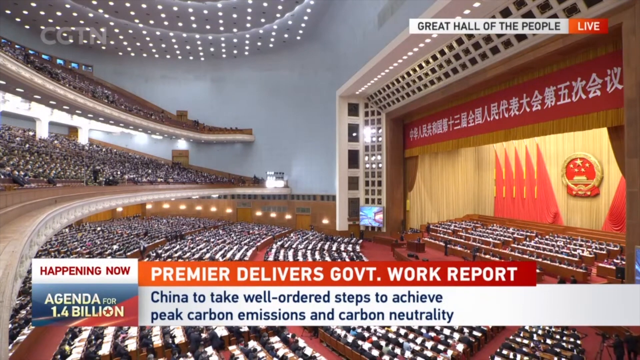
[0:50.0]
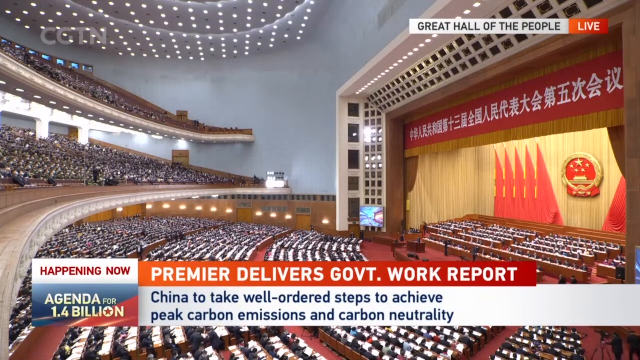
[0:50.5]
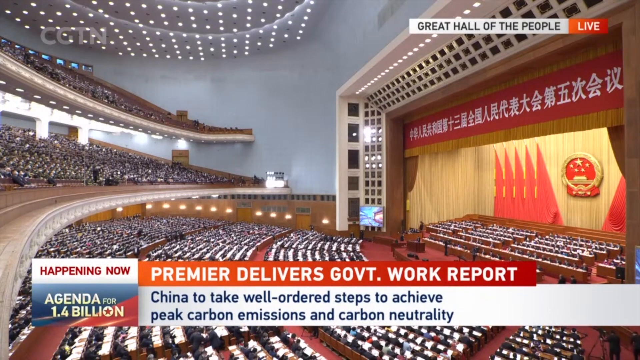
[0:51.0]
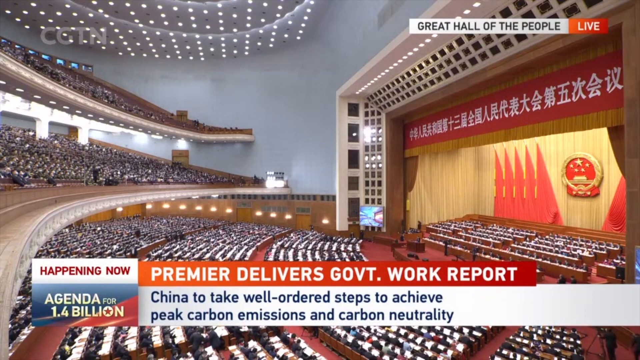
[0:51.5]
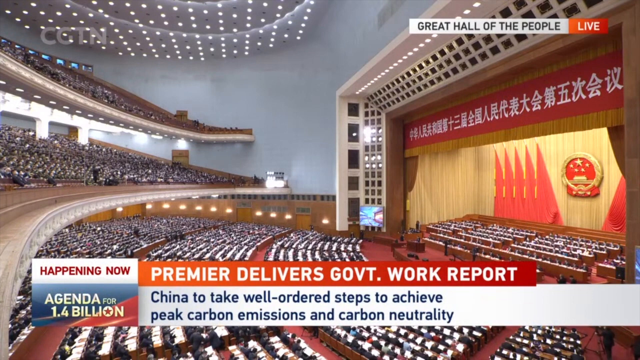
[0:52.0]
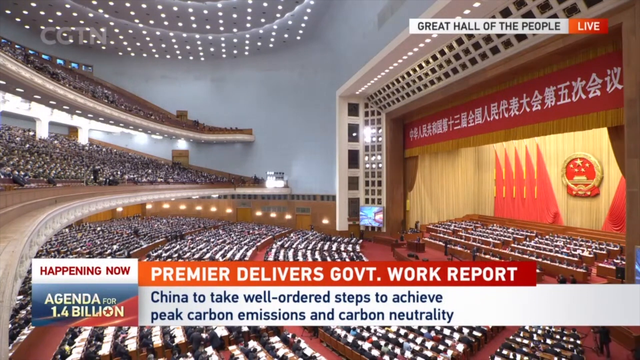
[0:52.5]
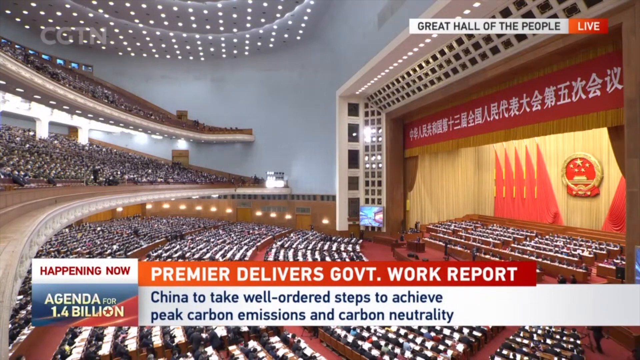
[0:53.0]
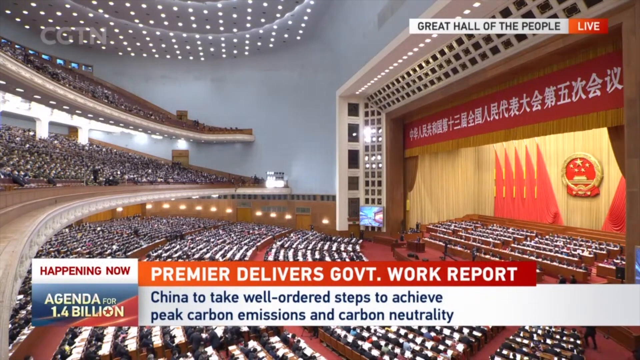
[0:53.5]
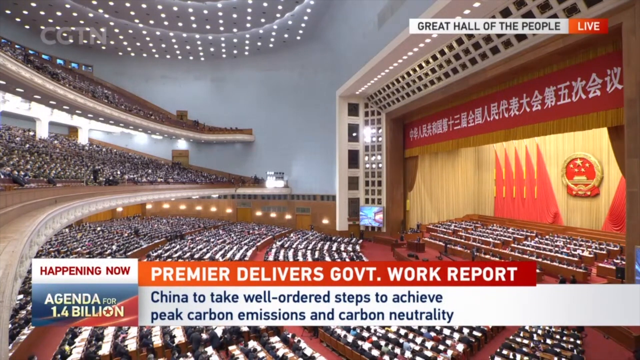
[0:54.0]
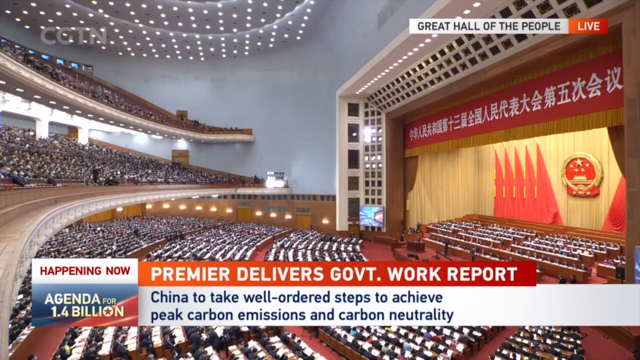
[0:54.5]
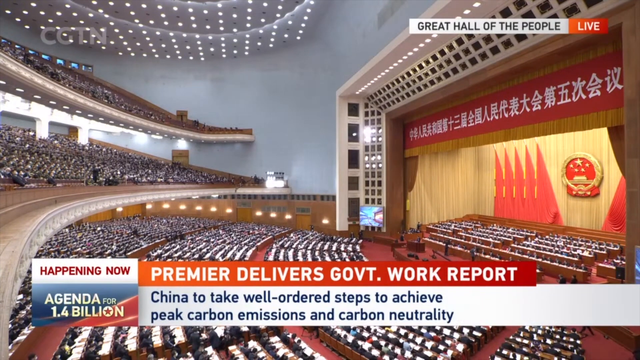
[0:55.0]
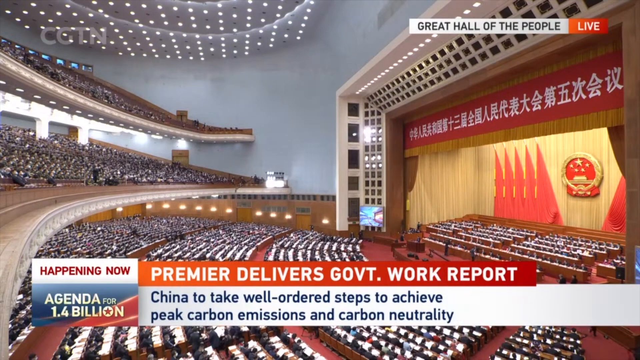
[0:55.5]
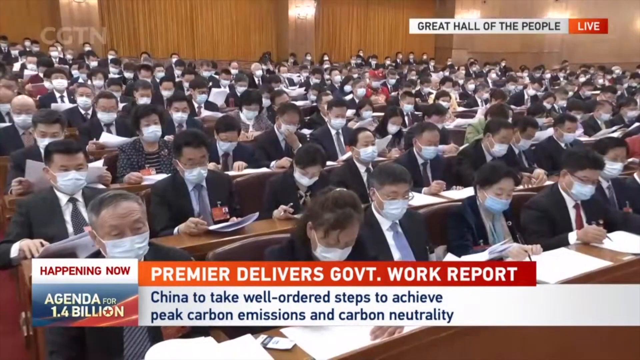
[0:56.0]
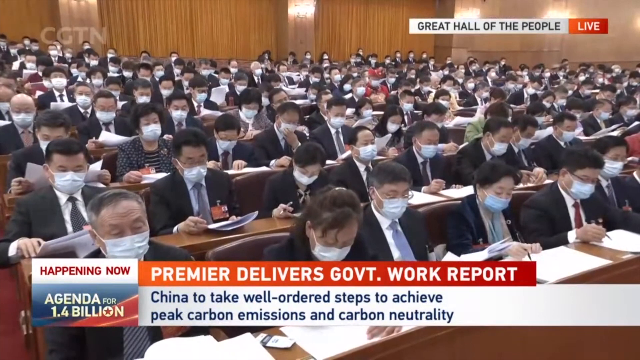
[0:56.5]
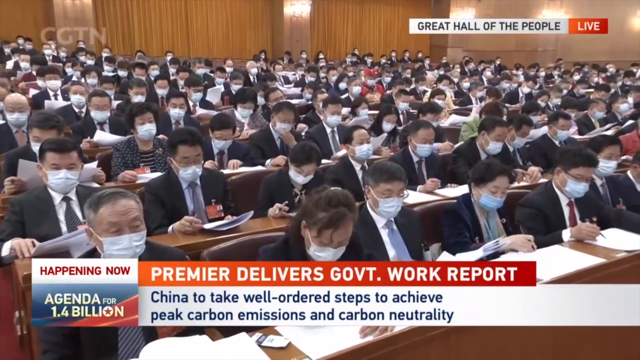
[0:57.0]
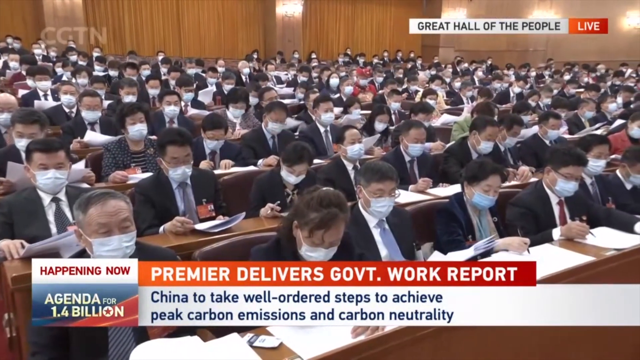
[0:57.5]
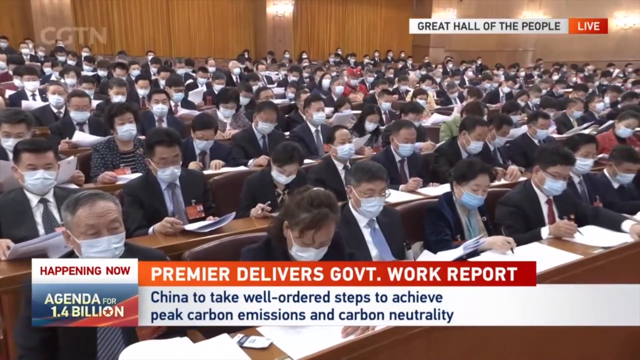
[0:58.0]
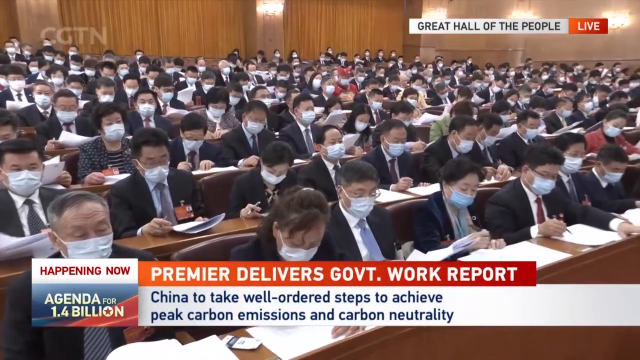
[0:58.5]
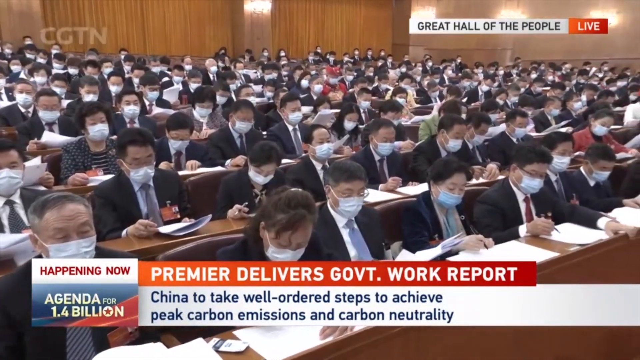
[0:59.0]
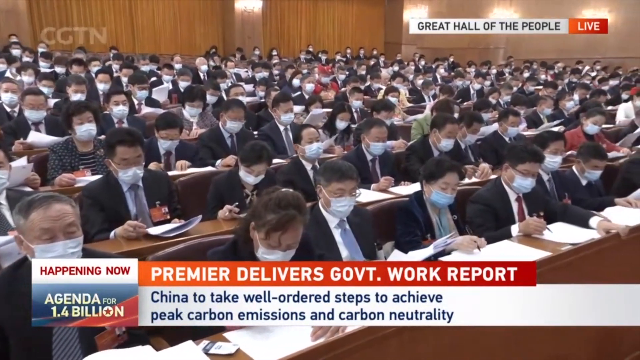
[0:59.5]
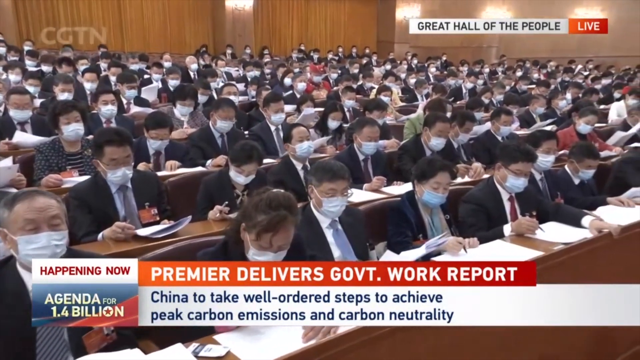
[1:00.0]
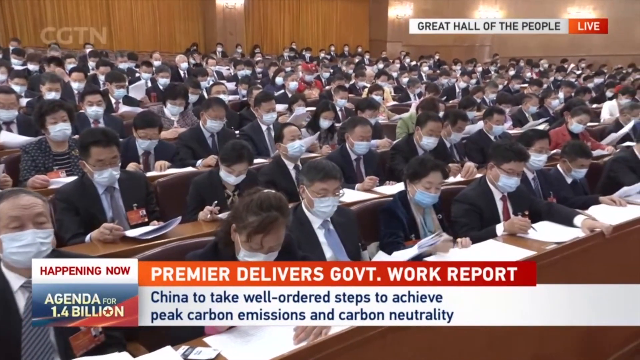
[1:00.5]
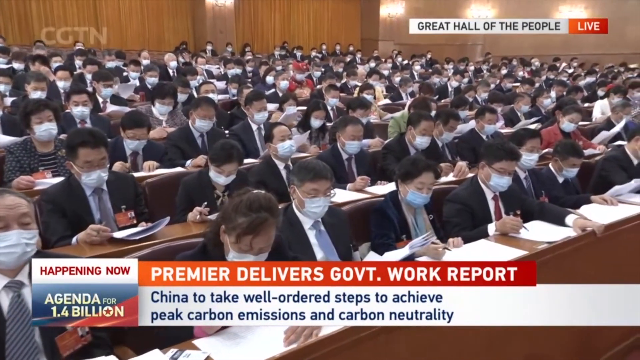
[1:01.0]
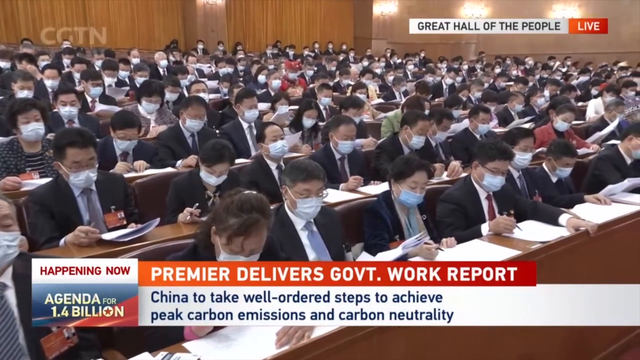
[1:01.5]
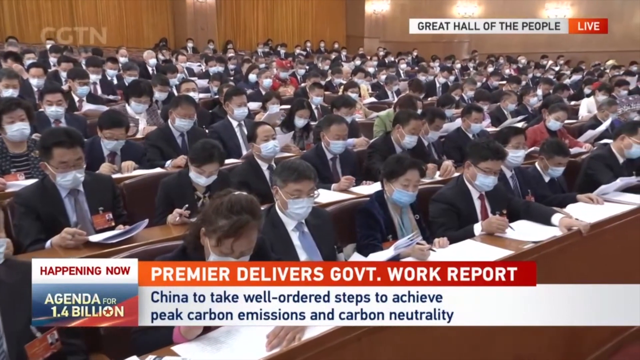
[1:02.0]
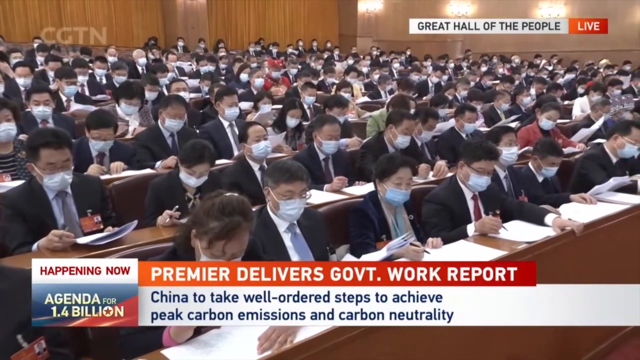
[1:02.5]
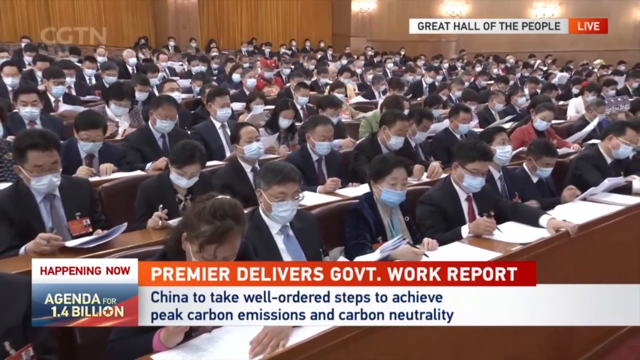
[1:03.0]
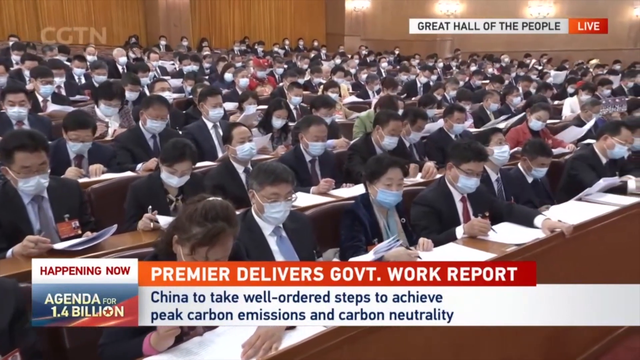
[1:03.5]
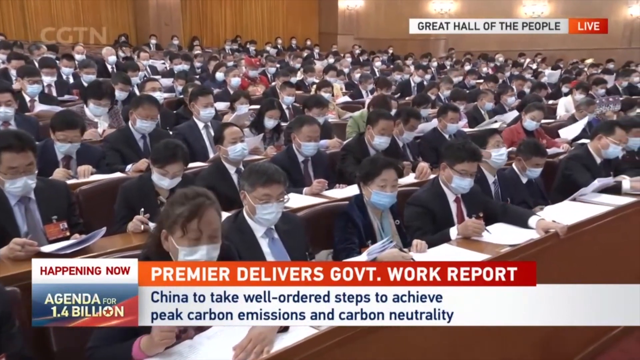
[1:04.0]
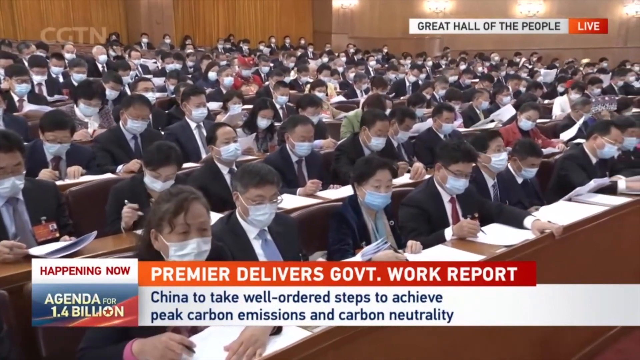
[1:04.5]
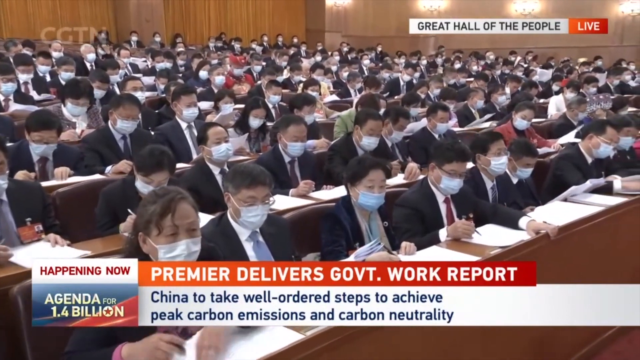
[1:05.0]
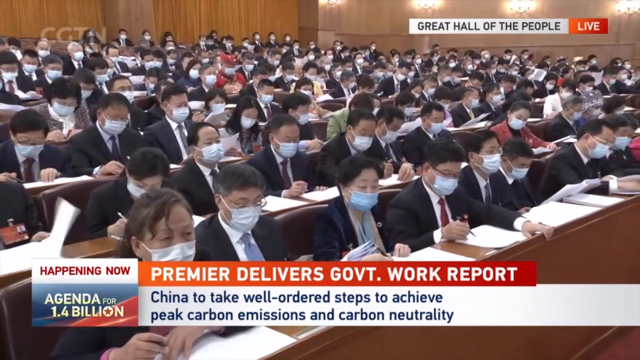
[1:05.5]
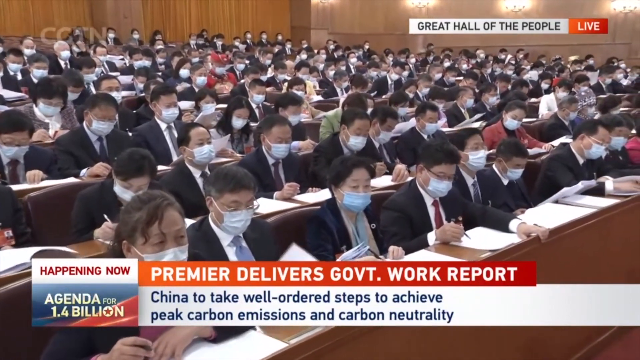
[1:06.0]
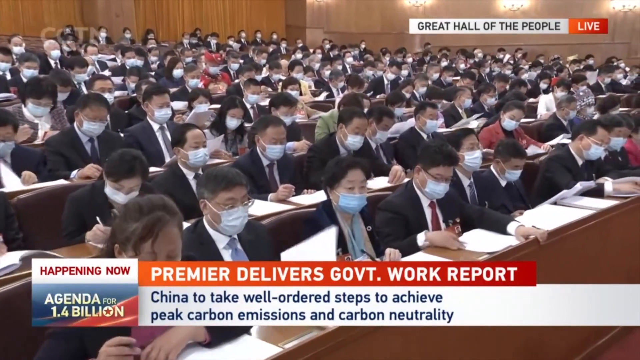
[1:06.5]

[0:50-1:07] After the side view comes another close-up of people at their desks. Everyone from this angle also appears to be wearing face coverings. They are all focused on the packets of paper in front of them, at times writing something on them and flipping through them. The camera pans slightly to the right, showing more of the people who are there.